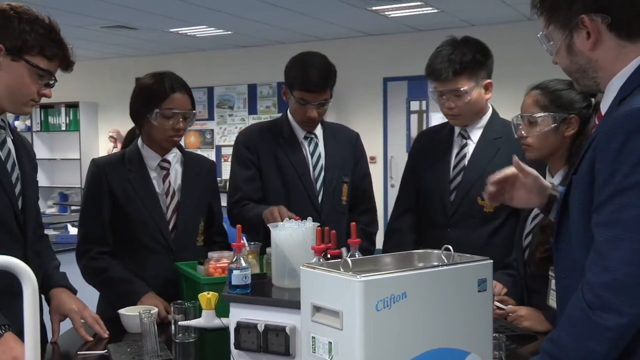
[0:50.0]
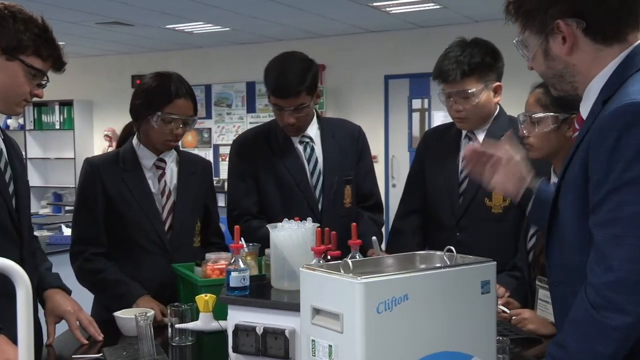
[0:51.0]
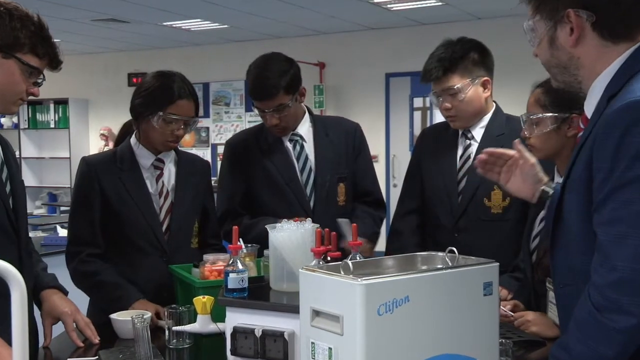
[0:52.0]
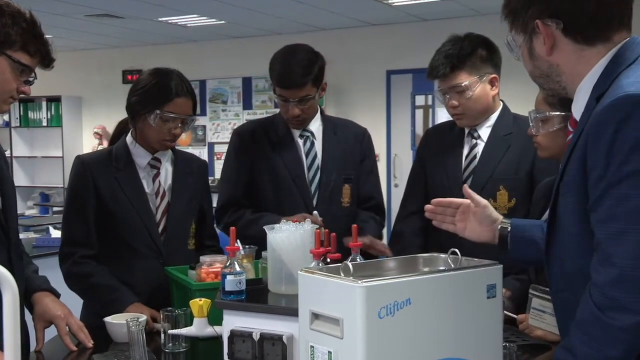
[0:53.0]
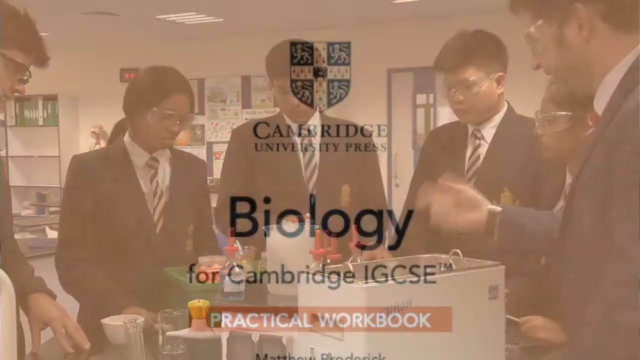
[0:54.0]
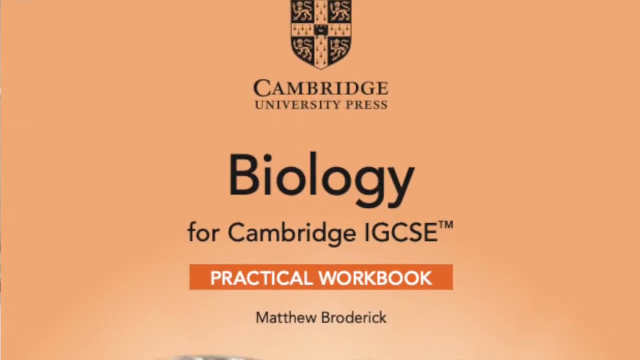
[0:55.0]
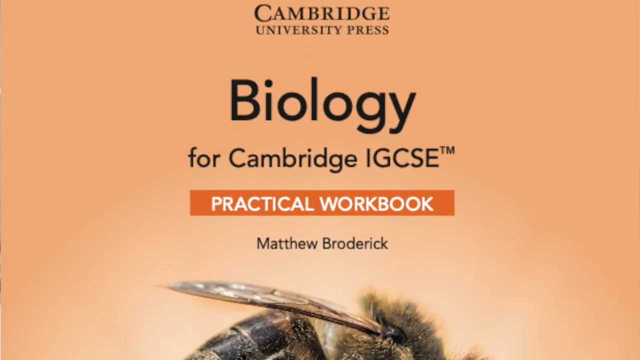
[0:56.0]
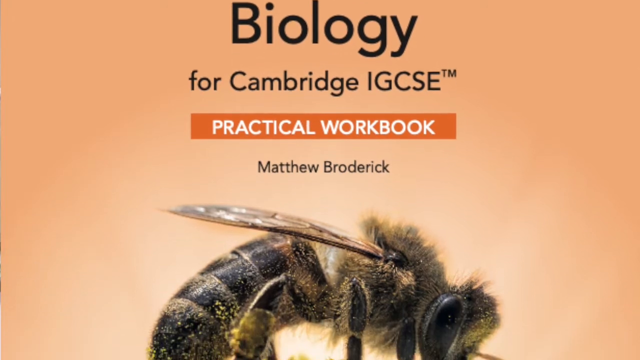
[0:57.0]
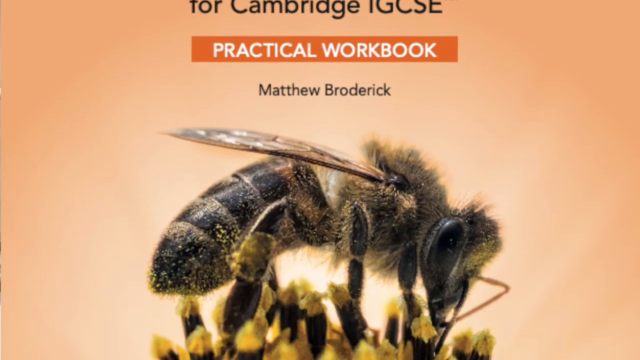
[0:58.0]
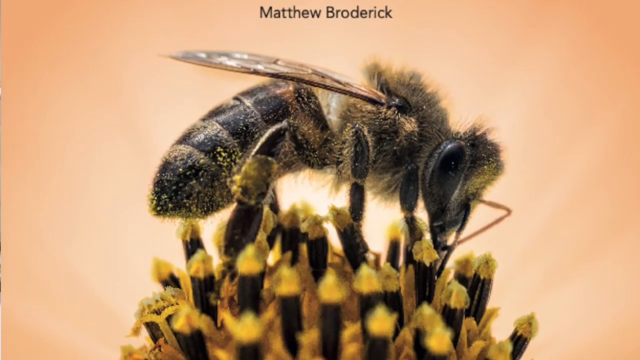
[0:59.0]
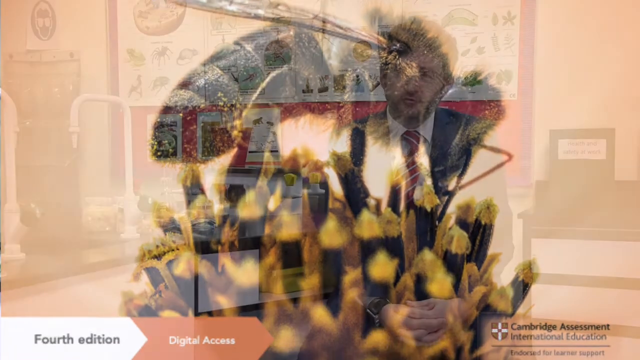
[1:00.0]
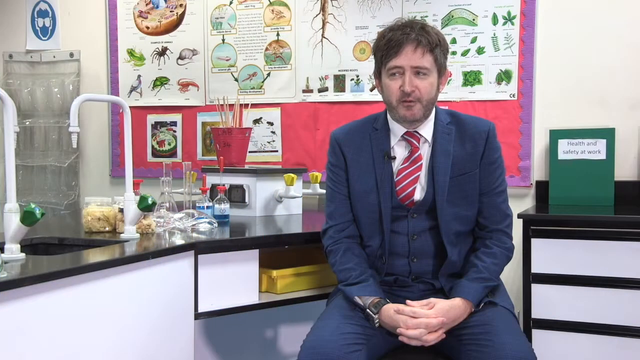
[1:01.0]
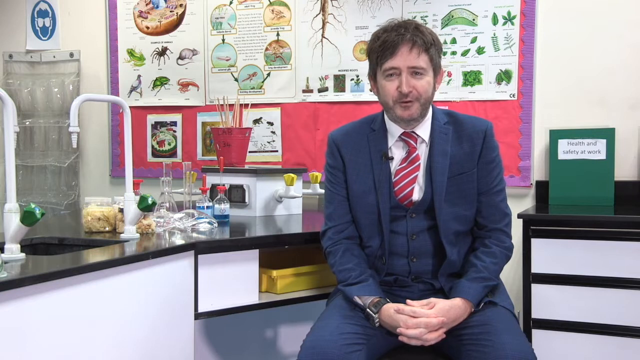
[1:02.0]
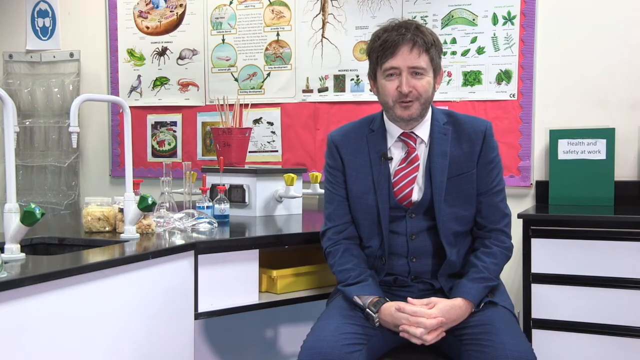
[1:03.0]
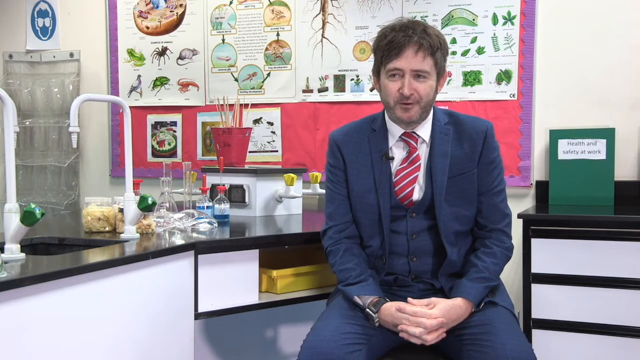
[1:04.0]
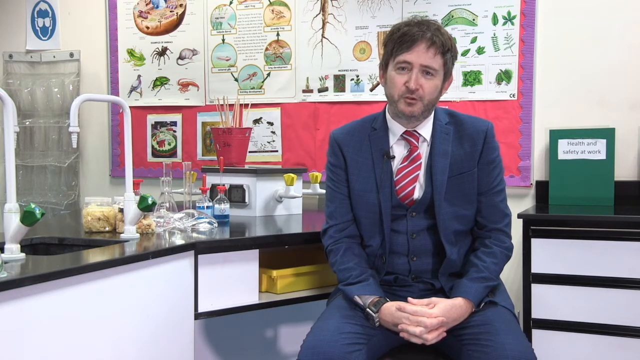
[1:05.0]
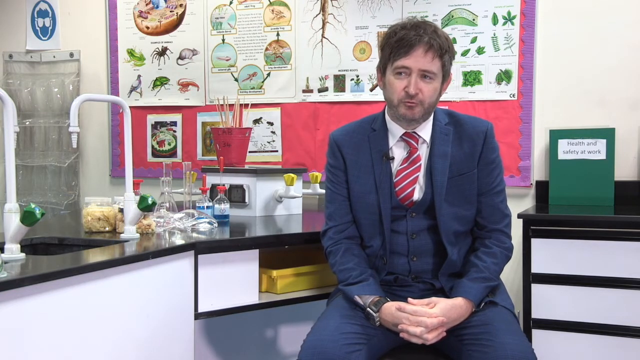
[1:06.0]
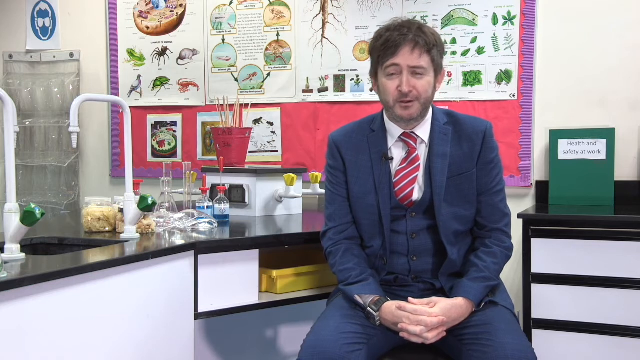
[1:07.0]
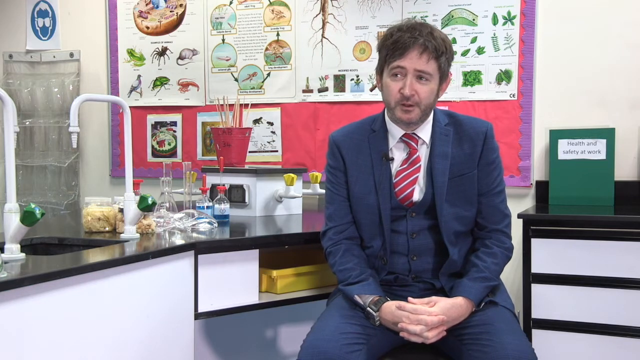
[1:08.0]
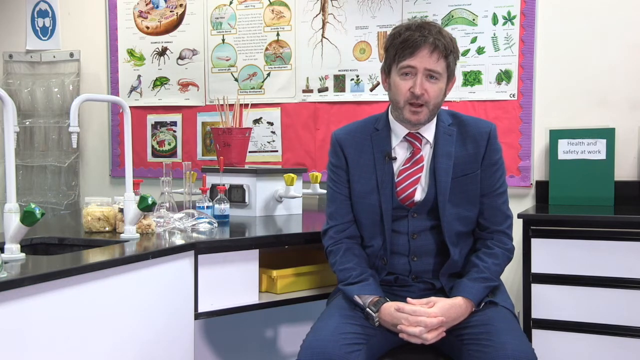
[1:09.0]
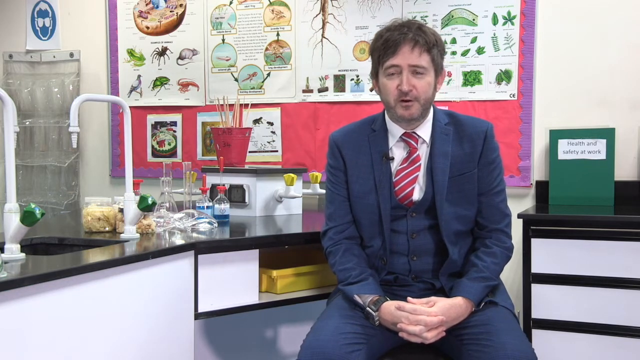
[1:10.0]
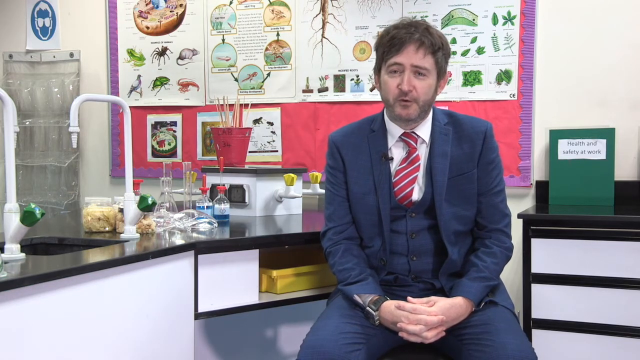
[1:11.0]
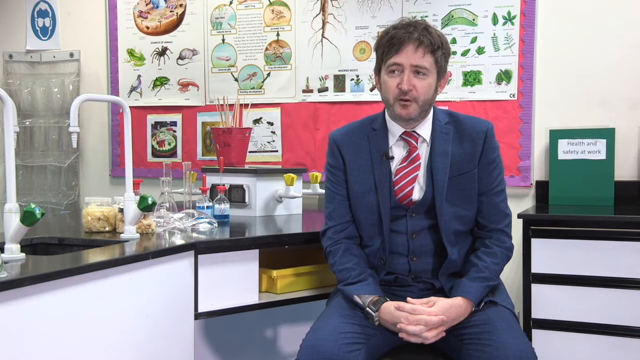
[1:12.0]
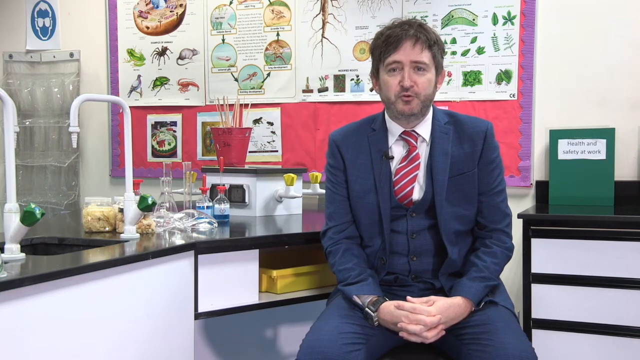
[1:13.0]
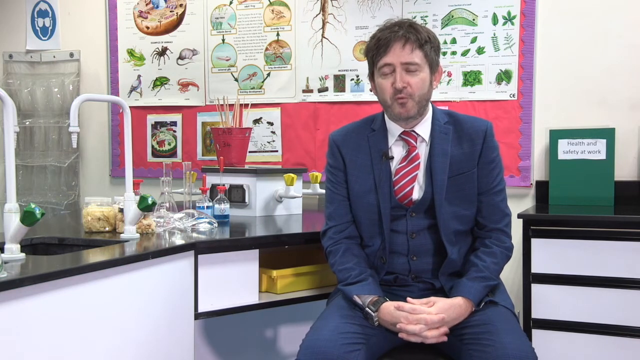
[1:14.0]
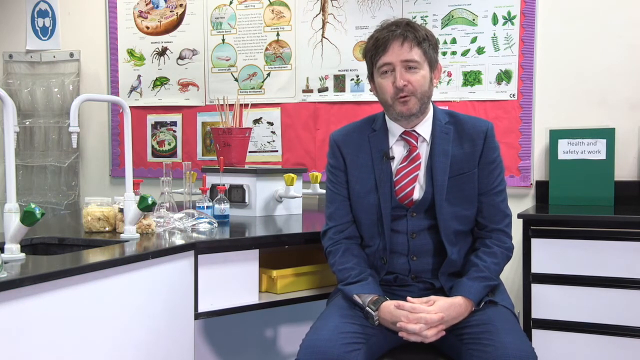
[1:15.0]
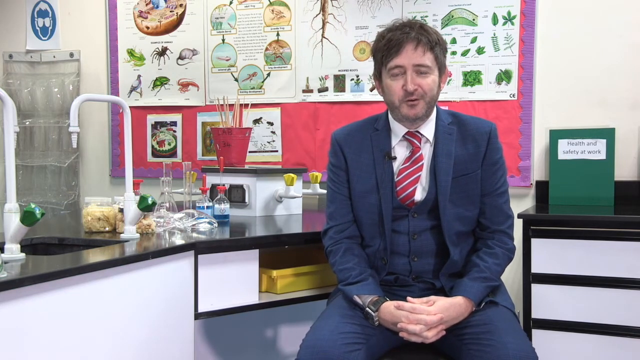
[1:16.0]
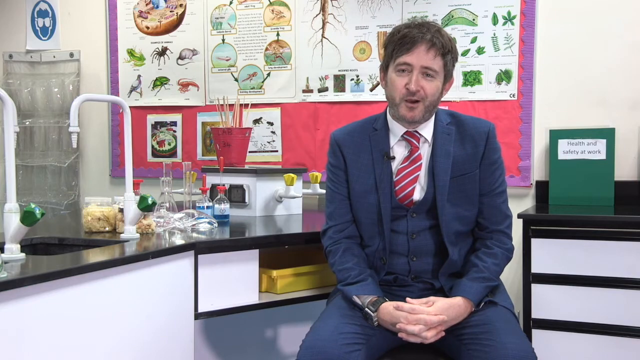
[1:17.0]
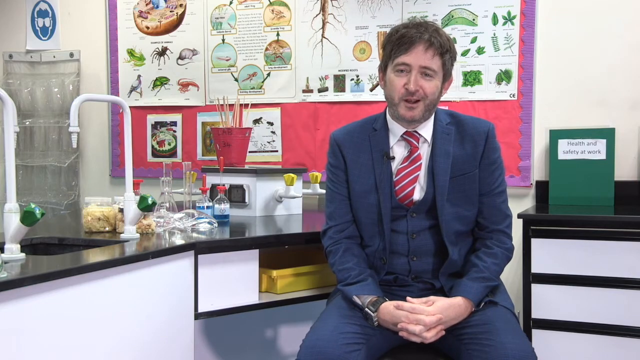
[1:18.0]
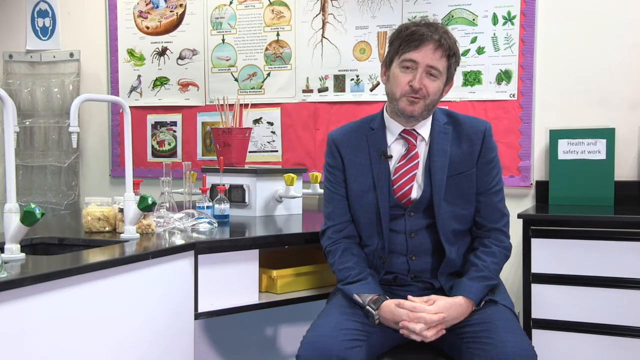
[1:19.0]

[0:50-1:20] Around five students, two girls and three boys, are standing in what looks to be a science classroom, all wearing protective eye goggles and apparently doing a science experiment. There seems to be lots of equipment in front of them, including some bottles, some boxes and pipette bottles. A teacher with them appears to be explaining what to do, his right hand up as he talks. Next comes a page with "Cambridge University Press" at the top and "Biology for Cambridge IGCSE Practical Workbook Matthew Broderick" underneath, on a pinky apricot background. The writing is black, and the words "Practical Workbook" are in a white font with an orange box behind them. A picture of a honeybee on a flower follows. The video then returns to the man who looks to be a teacher, sitting in the classroom and talking to the audience.